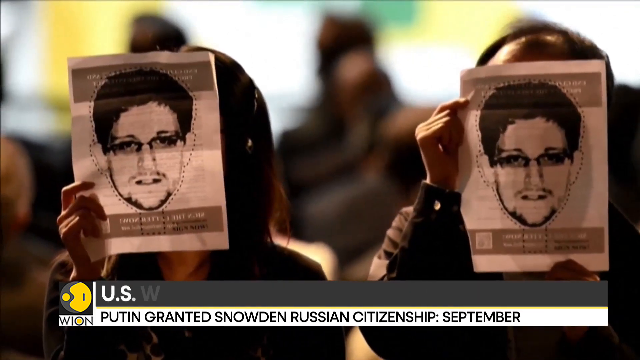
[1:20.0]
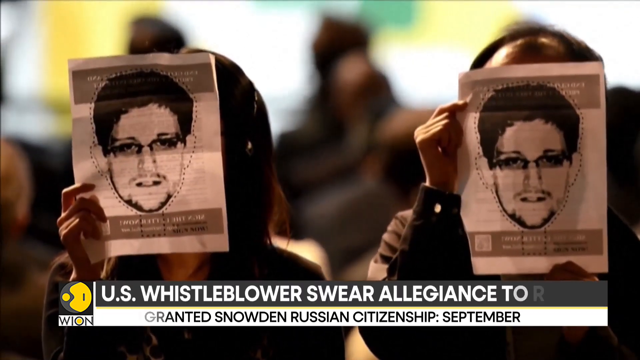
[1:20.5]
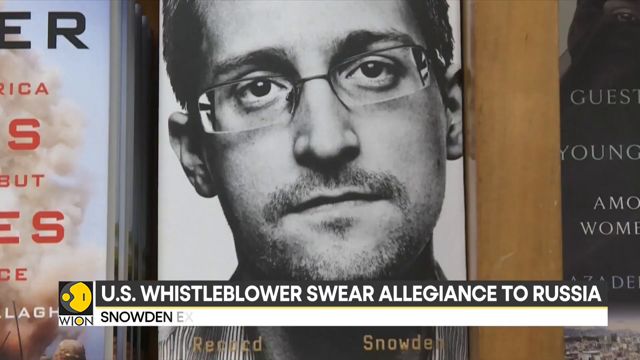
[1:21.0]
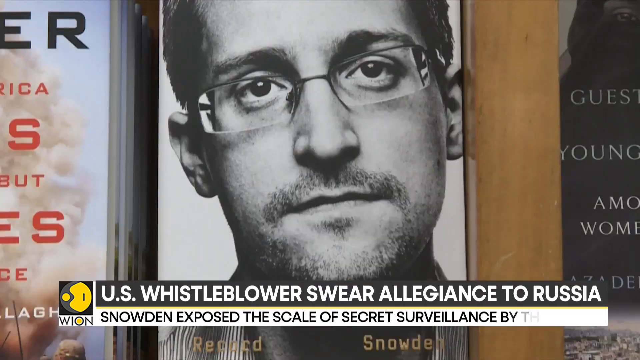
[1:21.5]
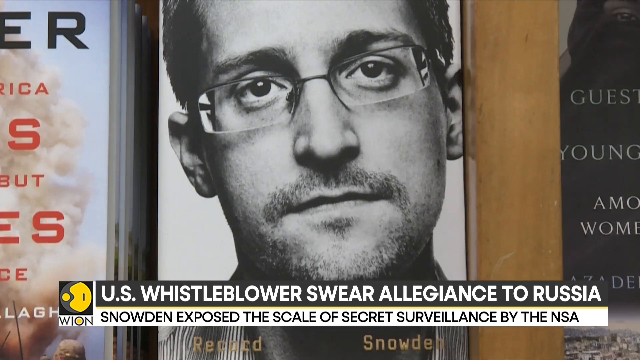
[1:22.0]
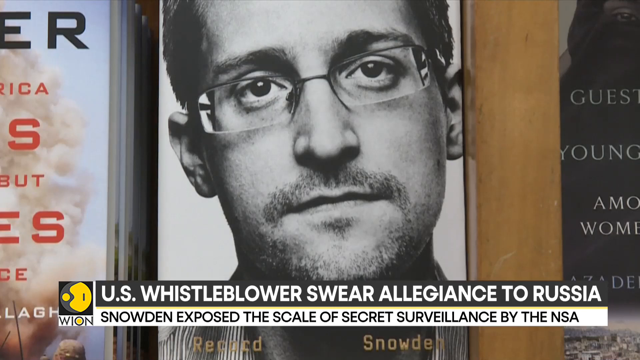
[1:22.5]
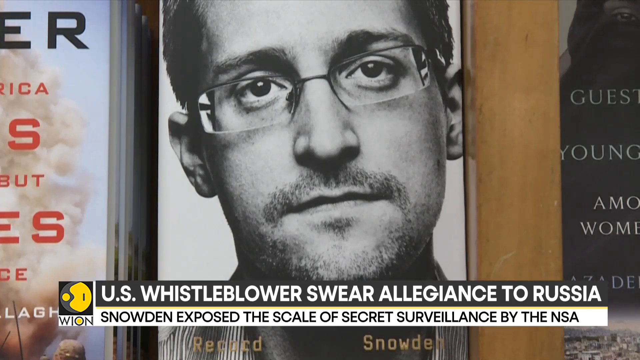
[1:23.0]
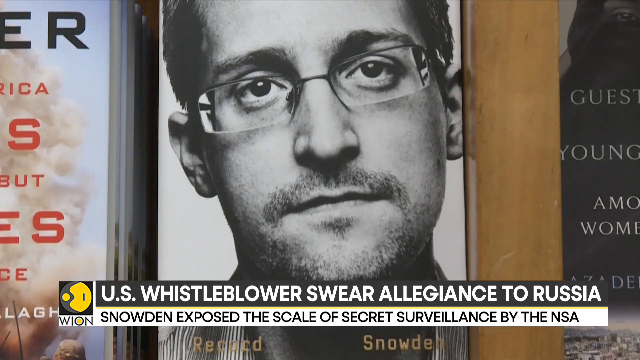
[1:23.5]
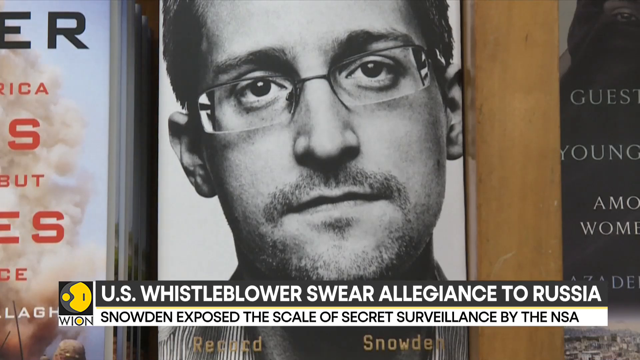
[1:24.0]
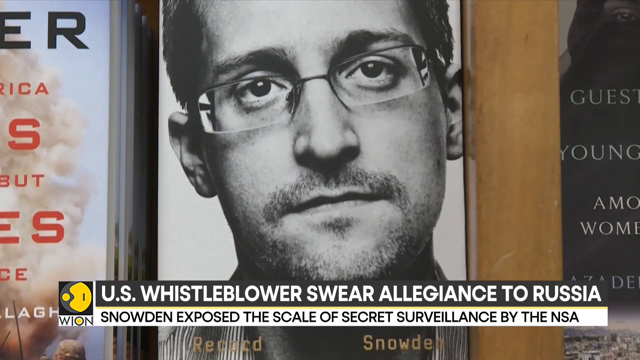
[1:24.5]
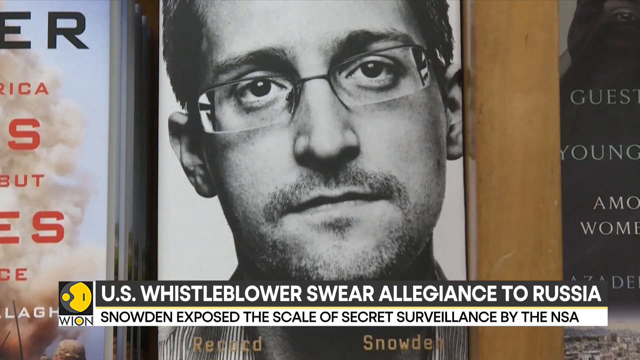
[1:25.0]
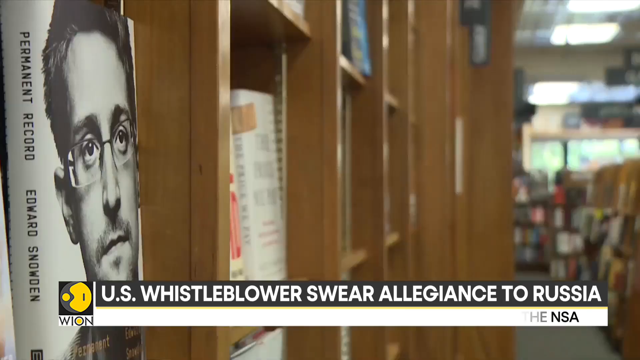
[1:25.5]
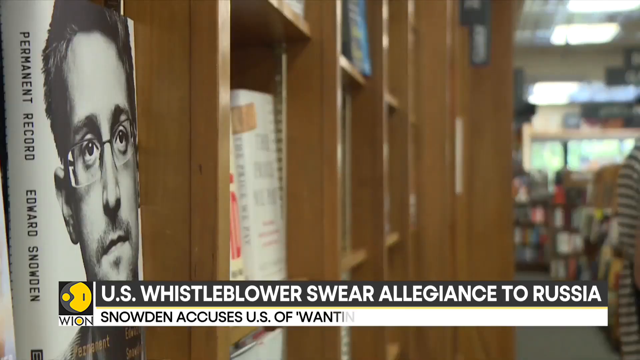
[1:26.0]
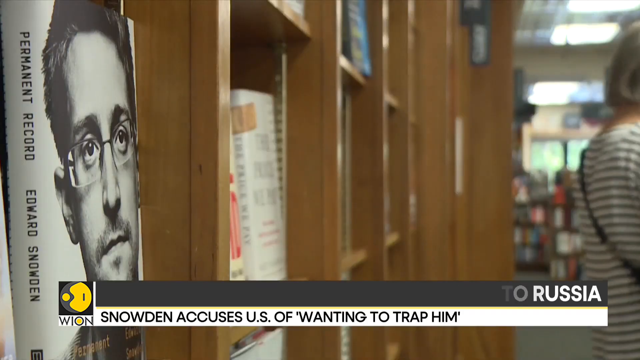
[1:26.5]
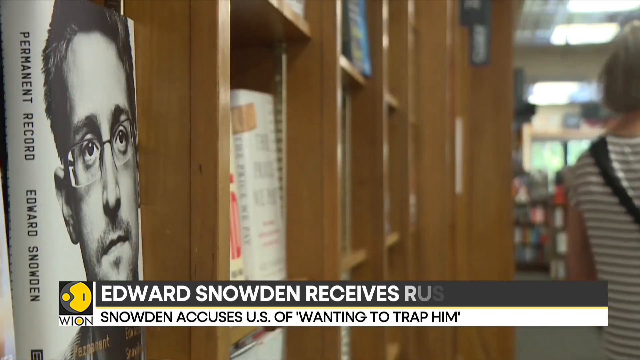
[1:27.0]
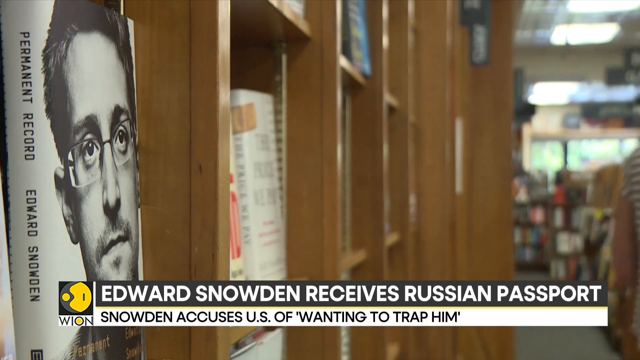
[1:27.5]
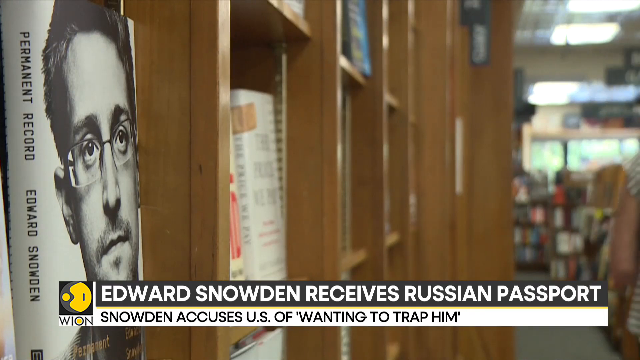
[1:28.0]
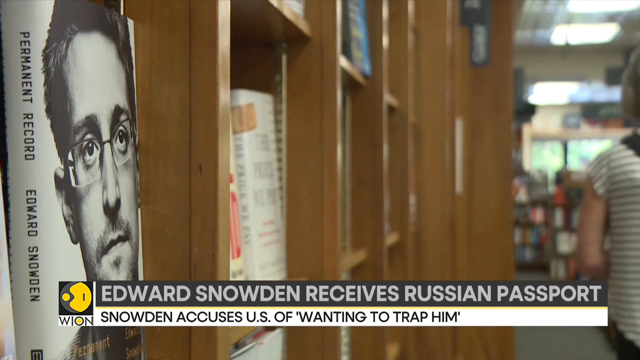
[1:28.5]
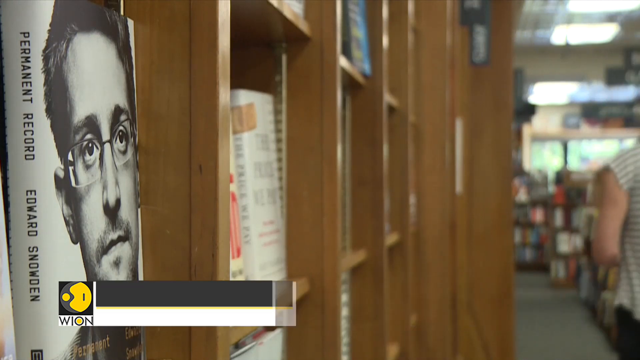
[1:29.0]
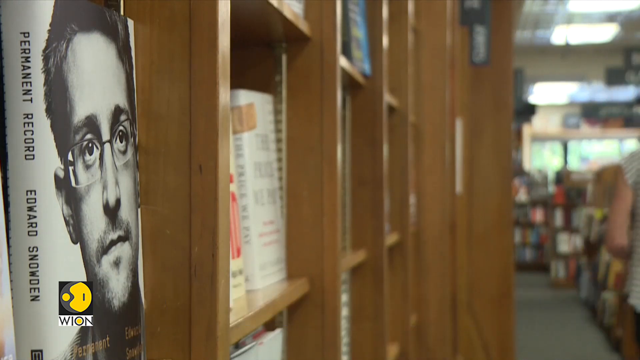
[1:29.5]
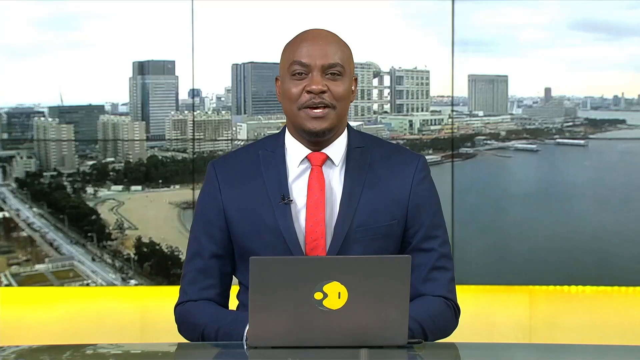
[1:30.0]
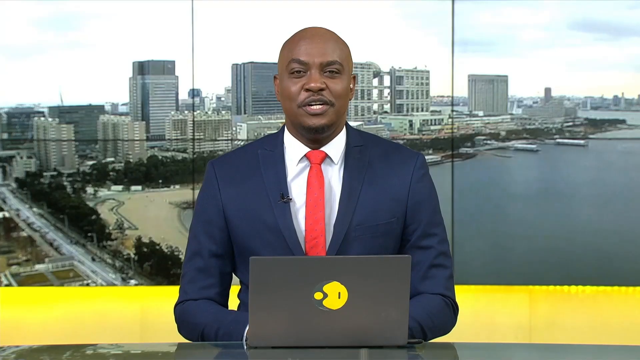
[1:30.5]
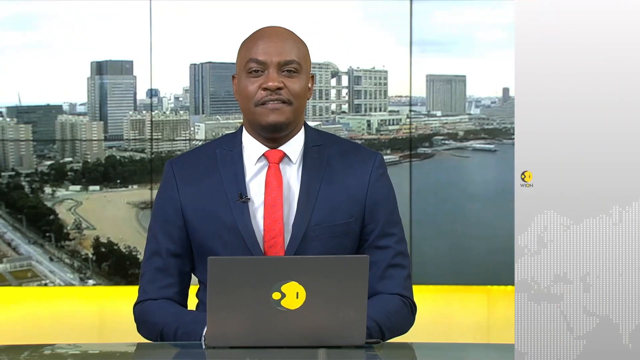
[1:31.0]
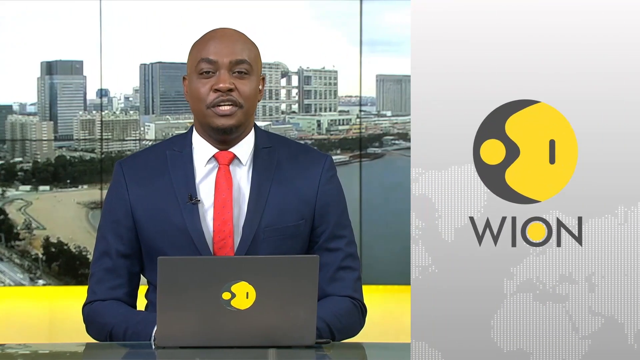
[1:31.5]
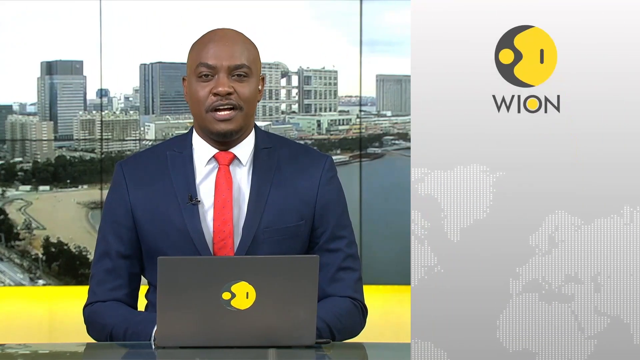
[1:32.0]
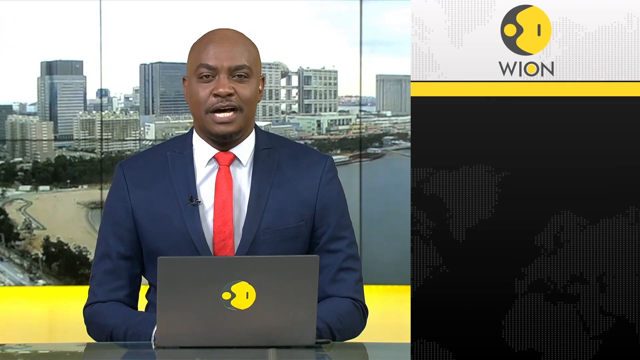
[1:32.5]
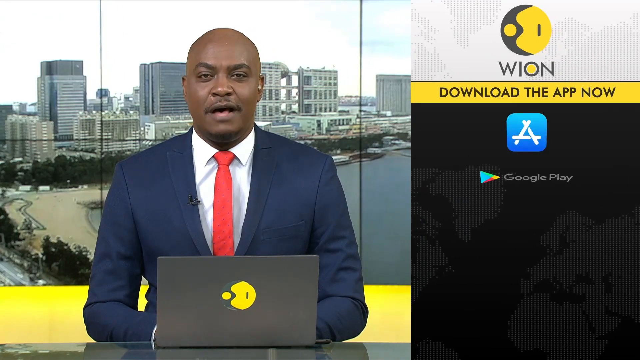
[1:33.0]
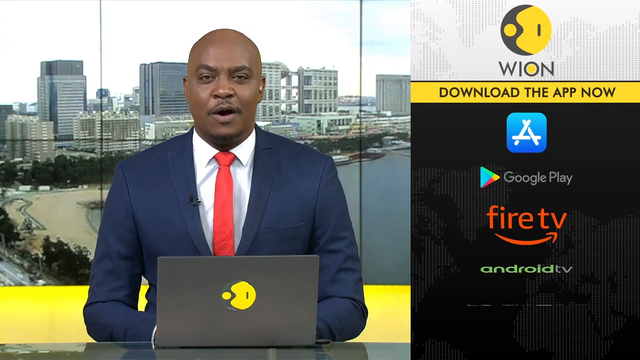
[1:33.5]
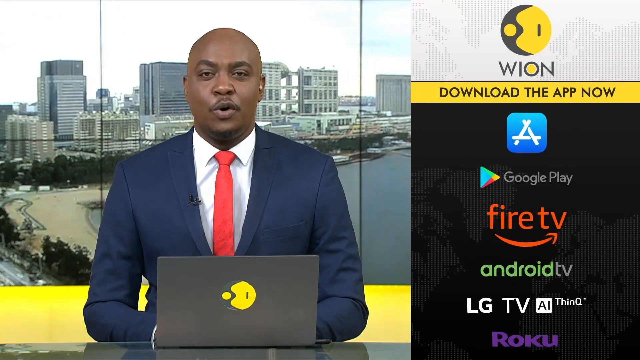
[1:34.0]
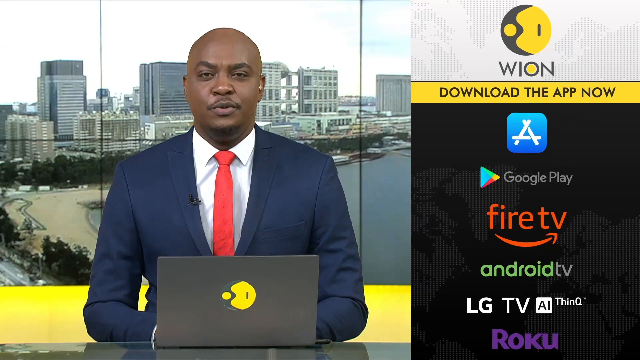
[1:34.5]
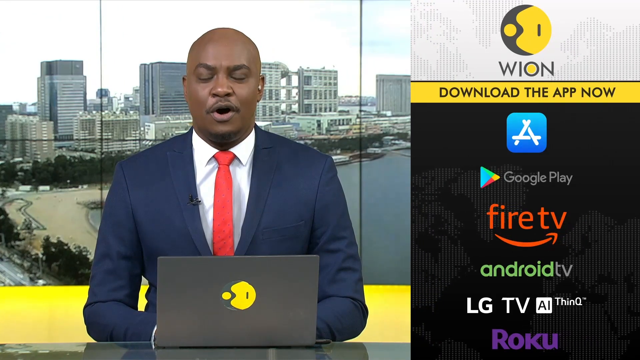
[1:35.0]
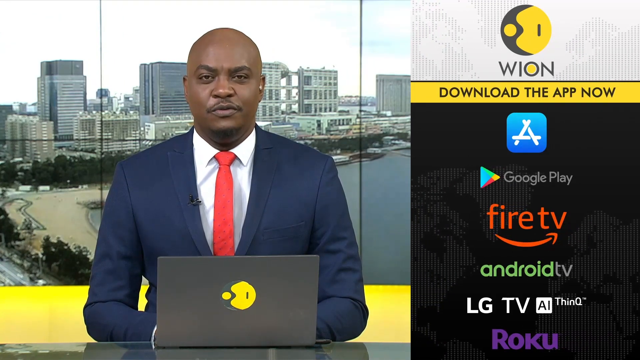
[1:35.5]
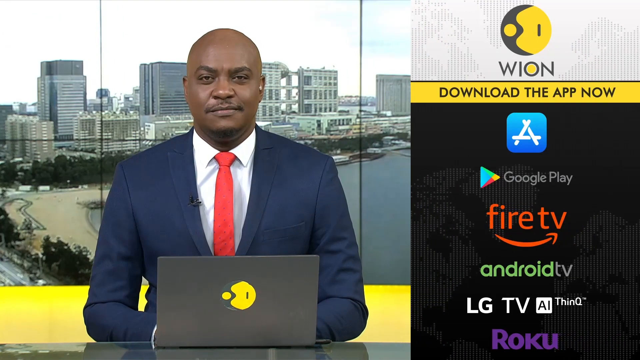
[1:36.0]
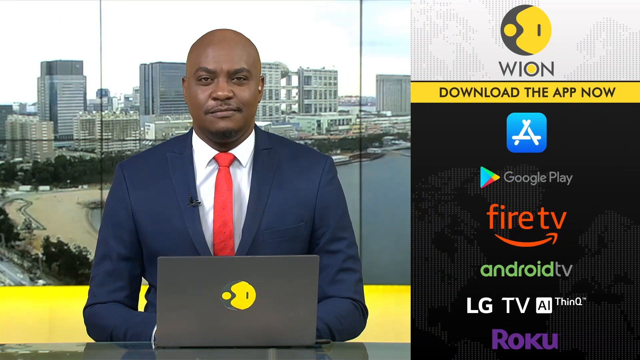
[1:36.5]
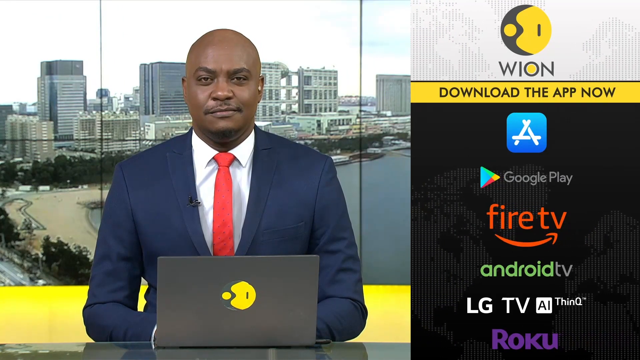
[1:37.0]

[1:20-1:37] A picture of Edward Snowden appears: the cover of his book, which reads "Permanent record," showing his face, possibly on the front or the back of the book. The WION logo appears on the newscaster's laptop, and the broadcast looks like a professional news program. Text reads "Snowden accuses the U.S. of wanting to trap him" and "download the app now, Google Play, Fire TV, Android TV." The newscaster sort of signs off. A shot of a bookstore shows the book on display. The newsroom then returns, with the newscaster wearing different clothes and no glasses, seemingly on a different day.